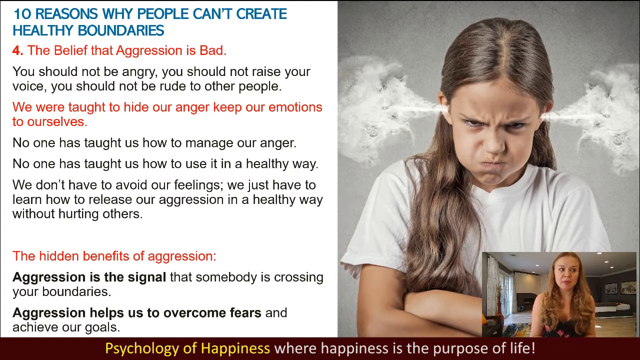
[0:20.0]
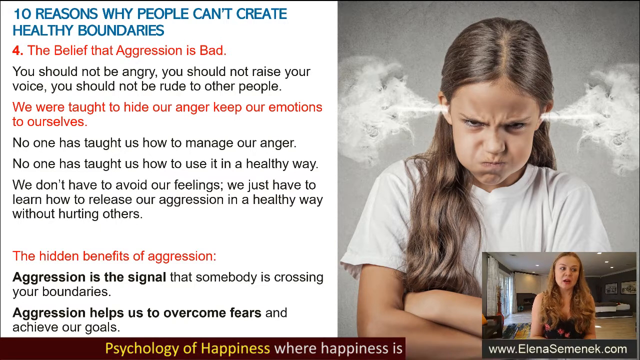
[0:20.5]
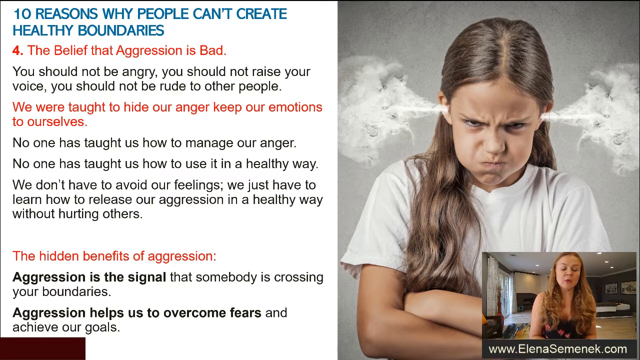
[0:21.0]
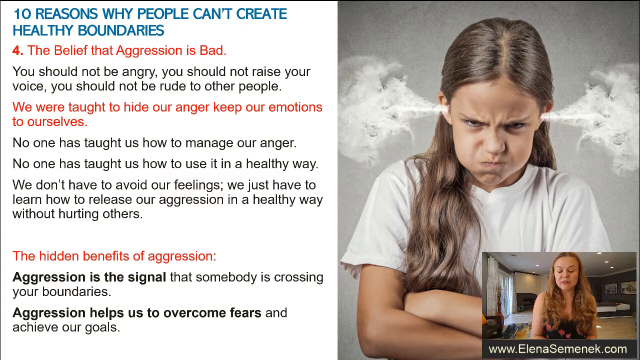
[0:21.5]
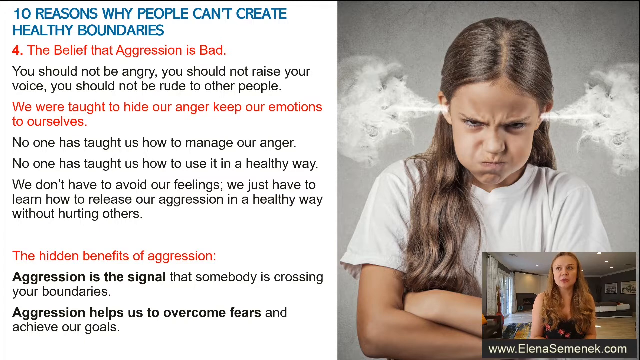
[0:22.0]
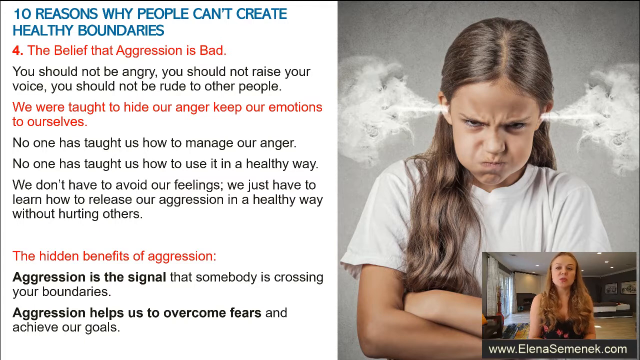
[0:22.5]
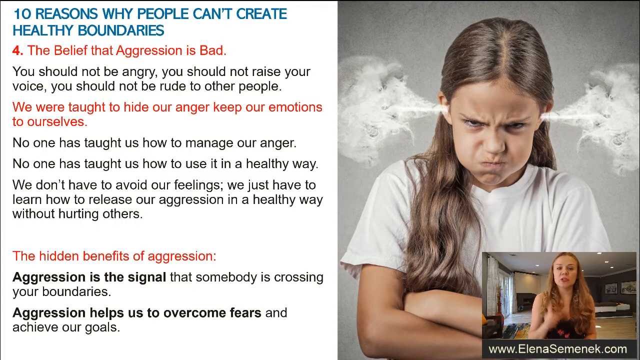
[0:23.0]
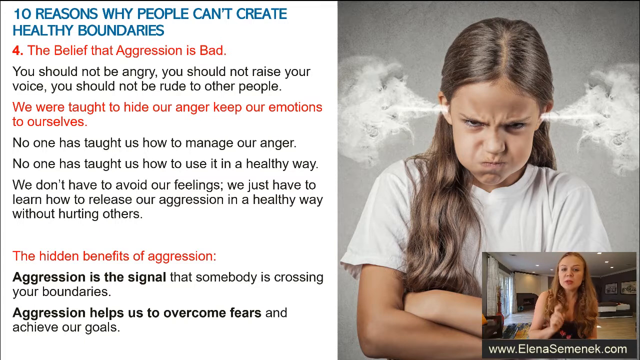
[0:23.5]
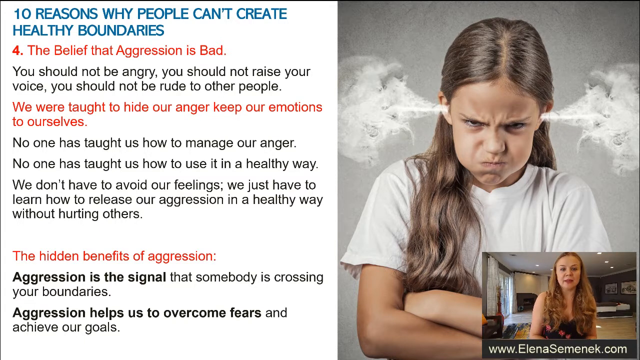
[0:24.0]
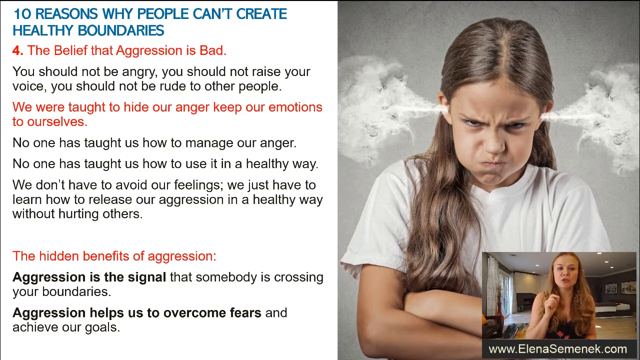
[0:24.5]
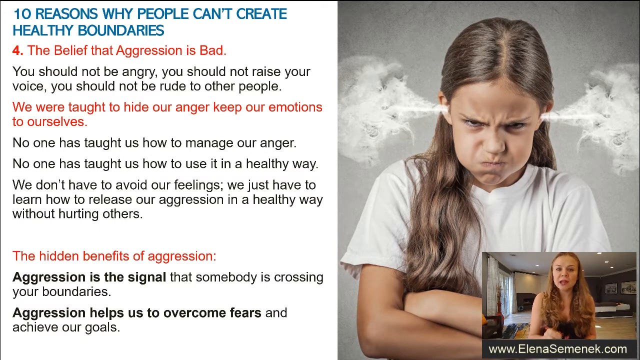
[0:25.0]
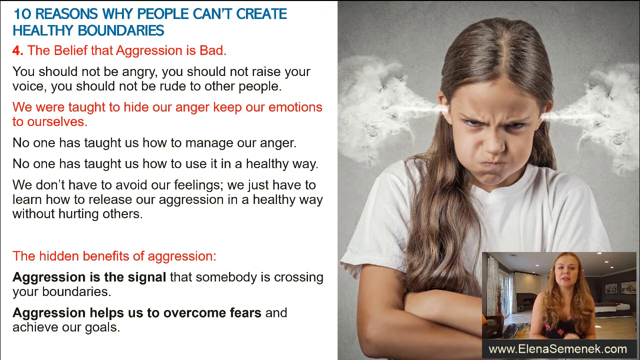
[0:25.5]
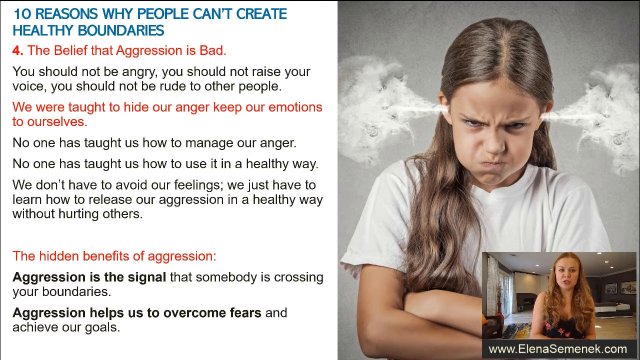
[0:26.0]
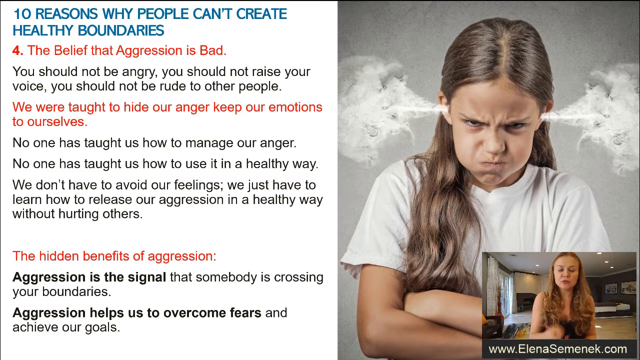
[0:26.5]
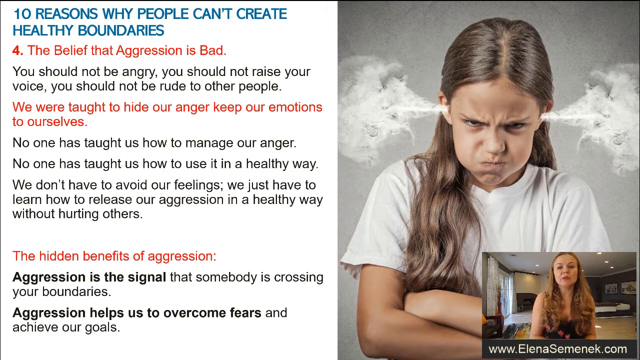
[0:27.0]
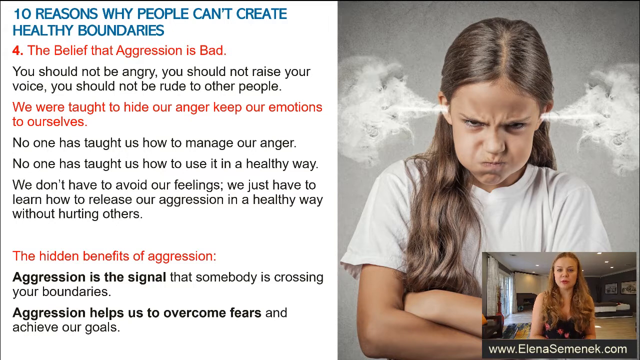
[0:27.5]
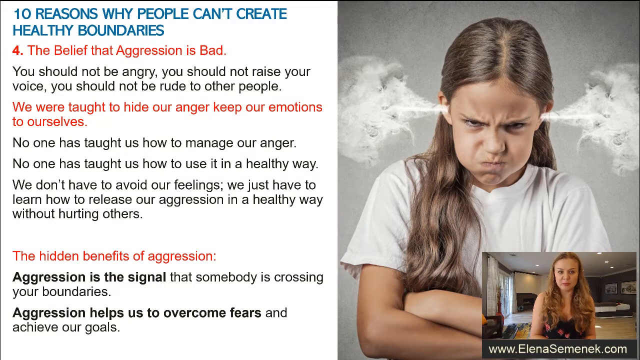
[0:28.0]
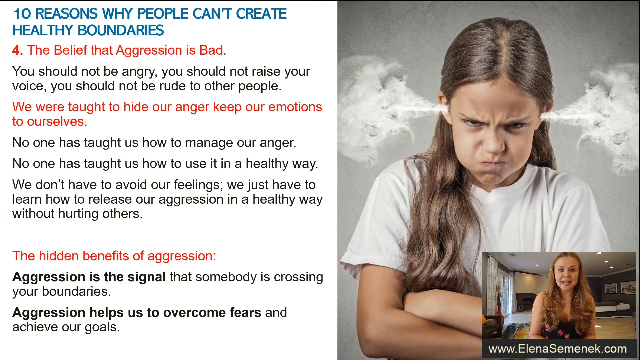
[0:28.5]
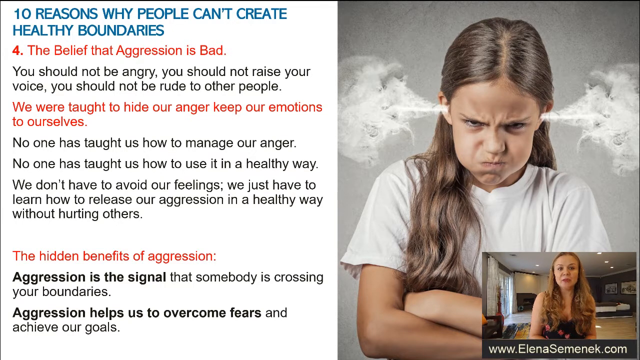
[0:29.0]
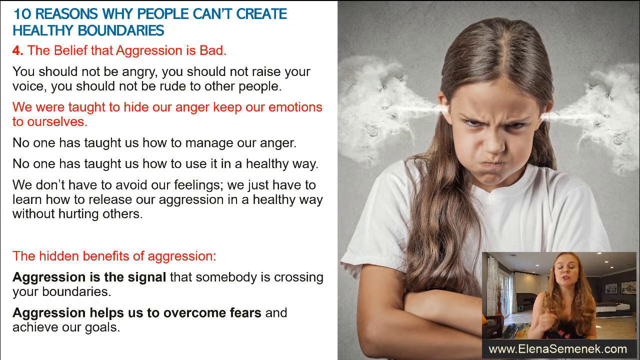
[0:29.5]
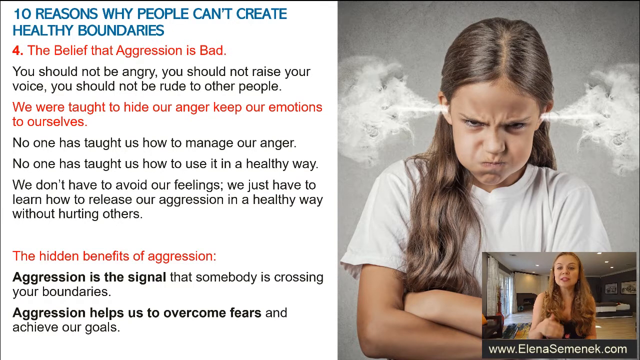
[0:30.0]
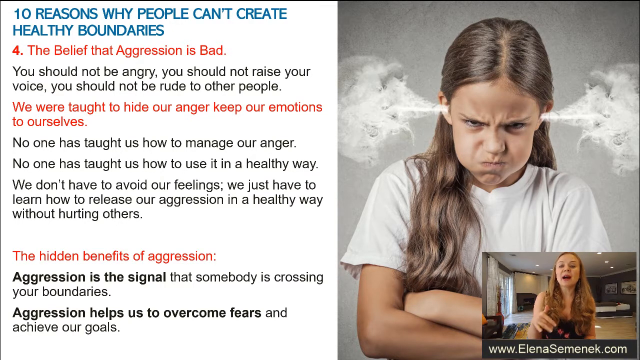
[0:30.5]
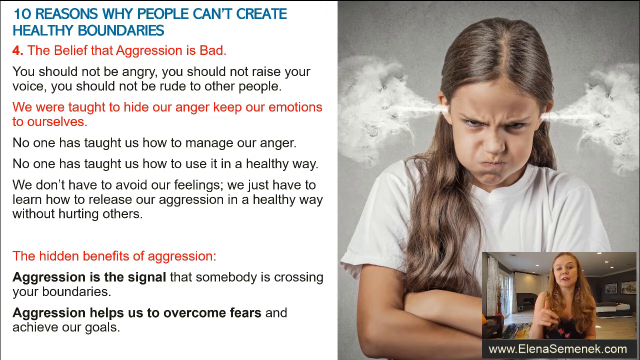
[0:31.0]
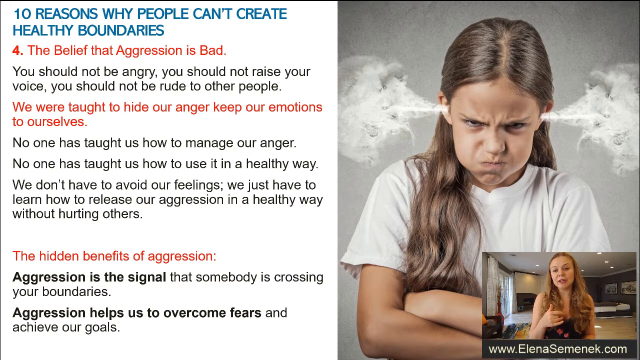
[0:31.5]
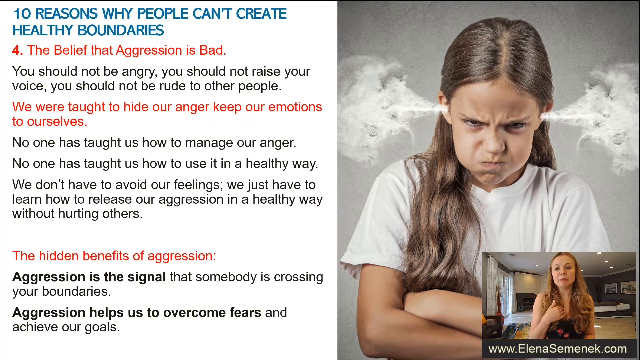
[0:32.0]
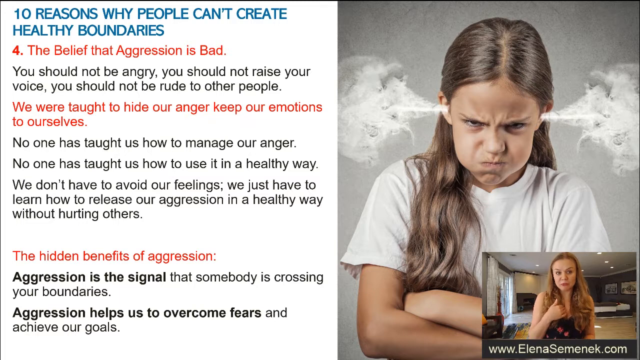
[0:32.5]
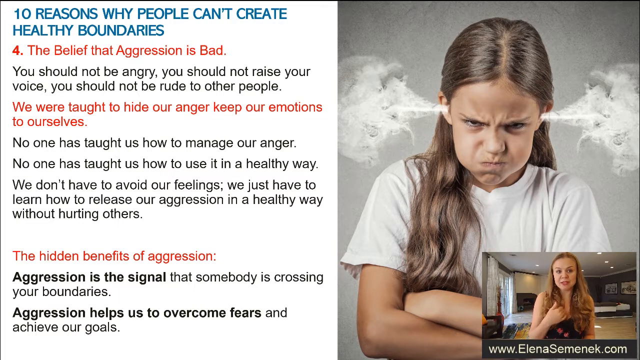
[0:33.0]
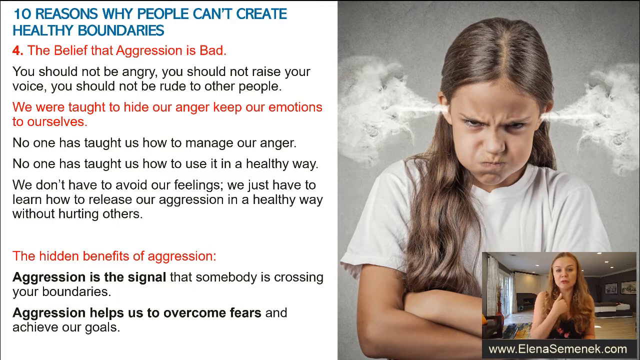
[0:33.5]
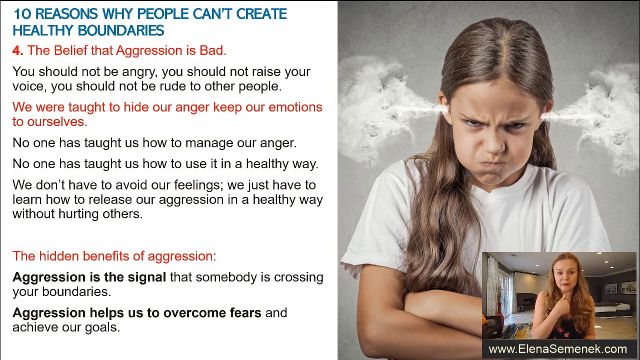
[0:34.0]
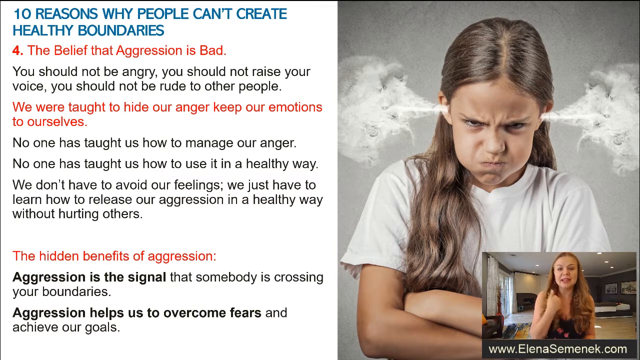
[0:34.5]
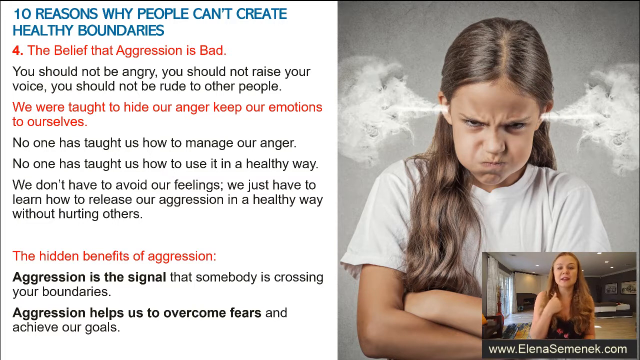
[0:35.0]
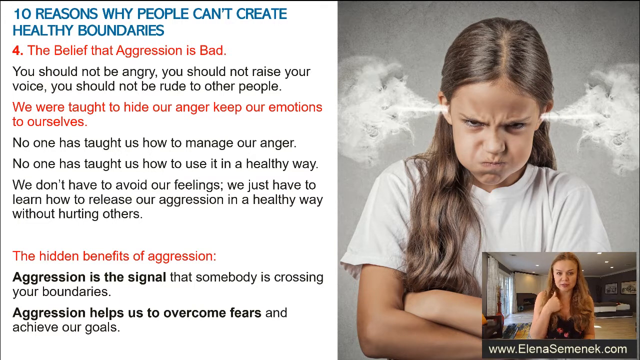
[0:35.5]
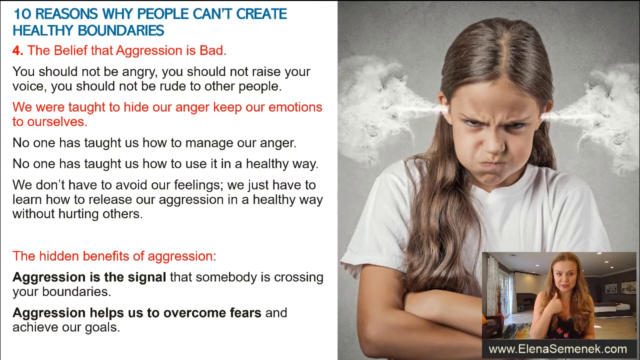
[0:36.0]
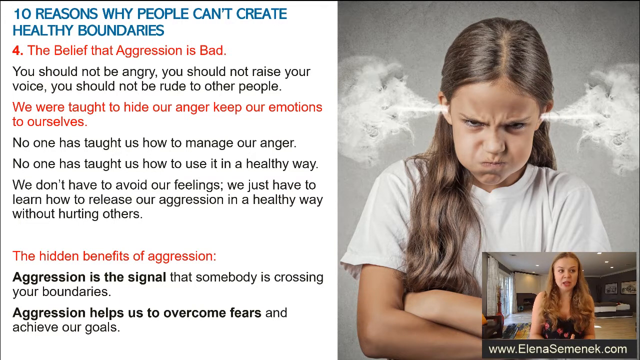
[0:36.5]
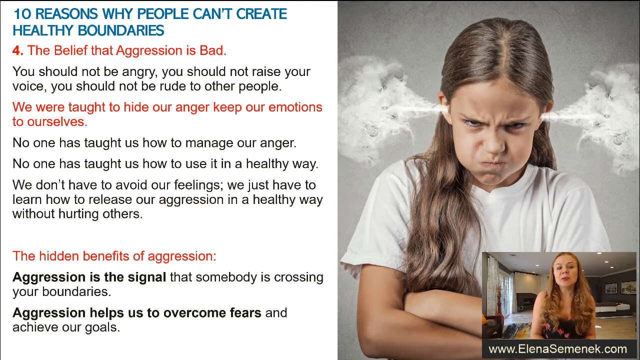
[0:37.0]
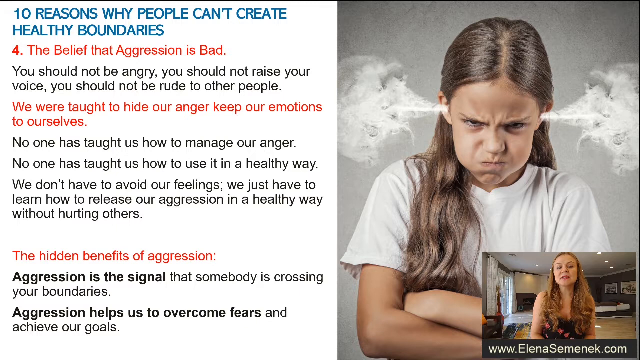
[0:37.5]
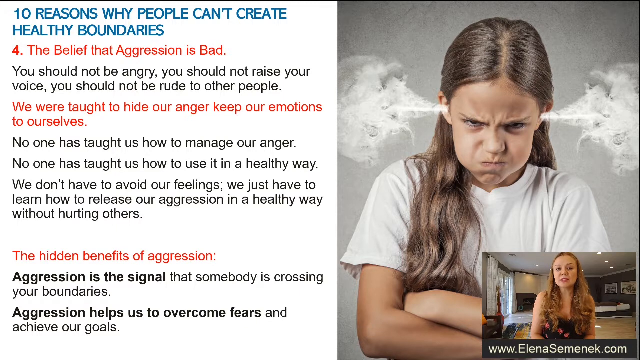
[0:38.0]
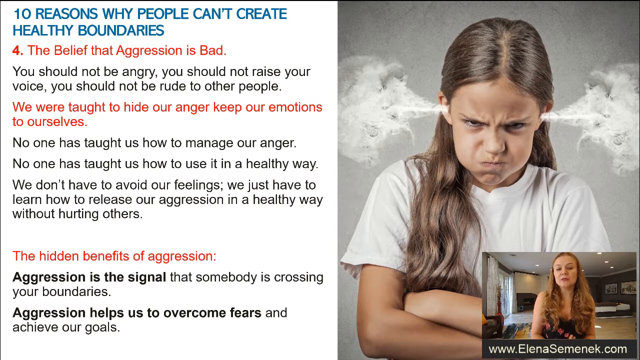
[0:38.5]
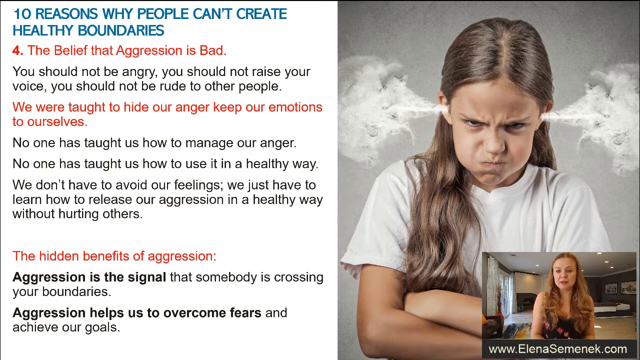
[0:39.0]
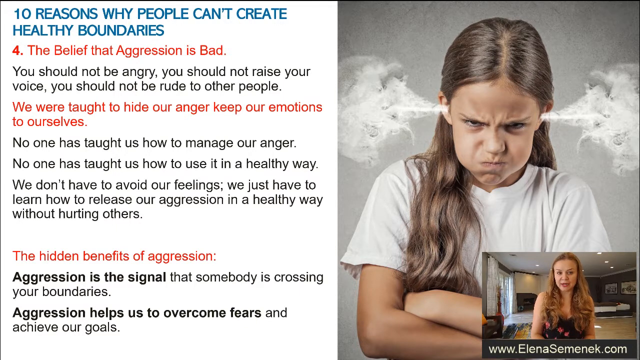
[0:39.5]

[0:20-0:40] The screen is divided into left and right halves. On the left is the heading "10 reasons why people can't create healthy boundaries" in blue, followed by the heading "4. The belief that aggression is bad" in red. Beneath it the text says "should not be angry", "you shouldn't raise your voice" and "should not be rude to other people". Another heading is about hiding our anger and keeping emotions to ourselves. The final heading, "The hidden benefits of aggression", is also in red, and beneath it in black text is "Aggression is the signal that somebody is crossing your boundaries". On the right-hand side is a young girl with what looks like pigtails and a centre parting, an angry, frowning expression, and smoke coming out of her ears. She wears a white t-shirt and her arms are folded. In the bottom right corner is a woman who seems to be narrating the video: a white woman with long brown hair swept off her face, with a central parting.